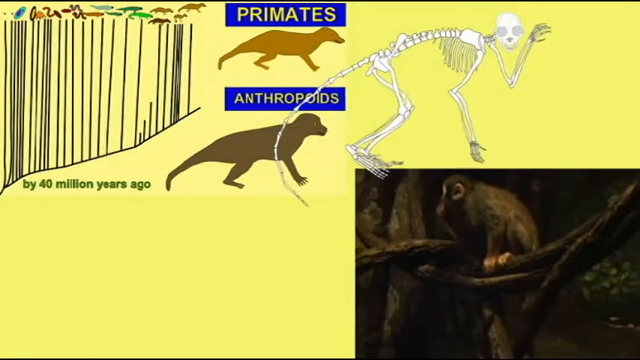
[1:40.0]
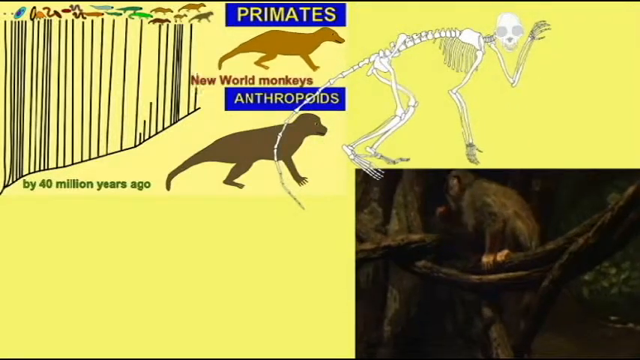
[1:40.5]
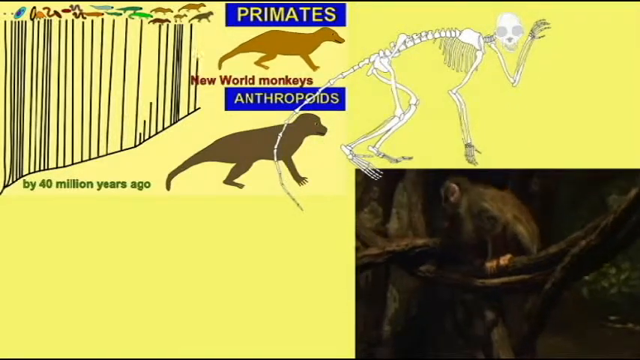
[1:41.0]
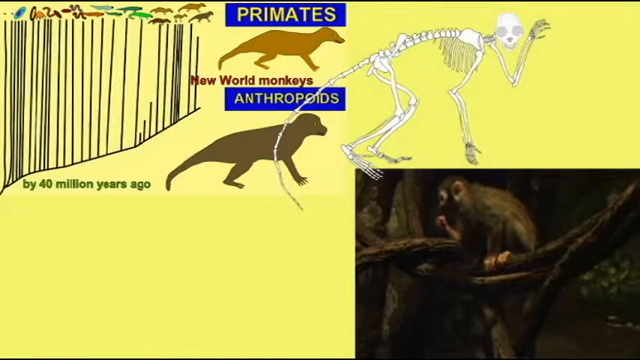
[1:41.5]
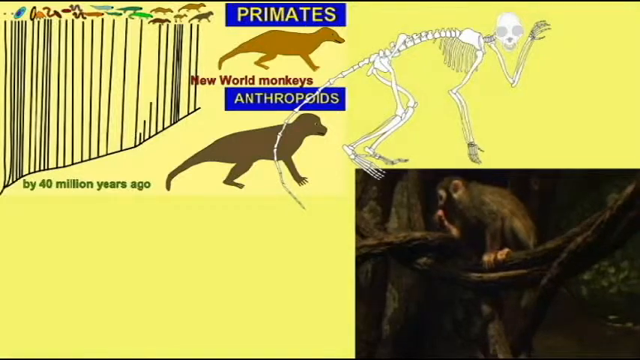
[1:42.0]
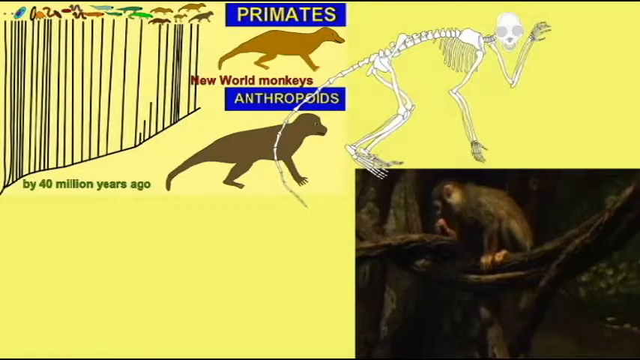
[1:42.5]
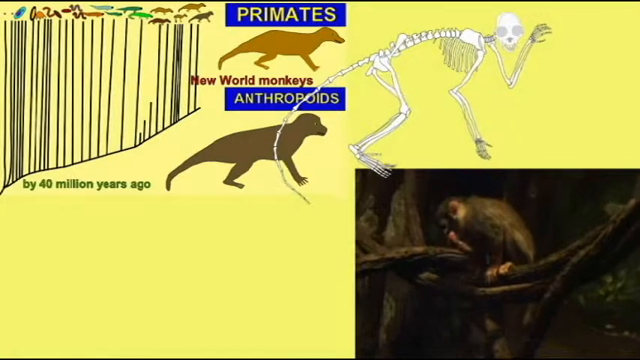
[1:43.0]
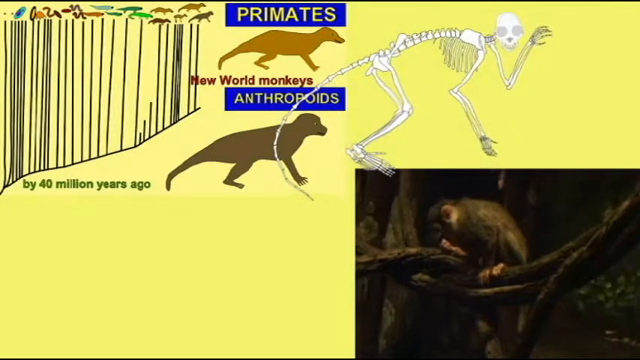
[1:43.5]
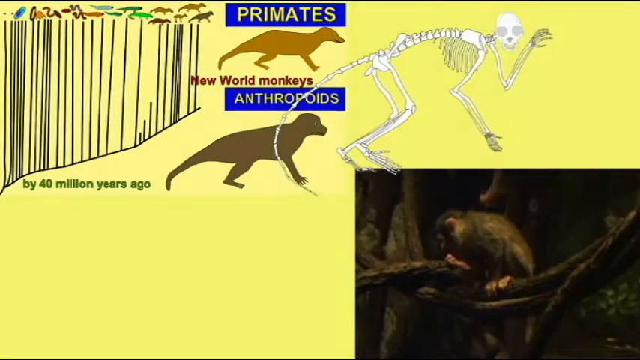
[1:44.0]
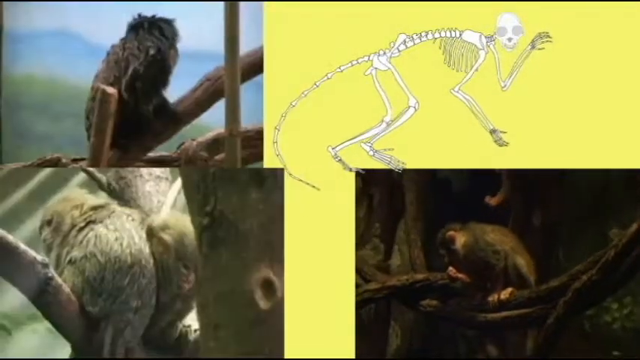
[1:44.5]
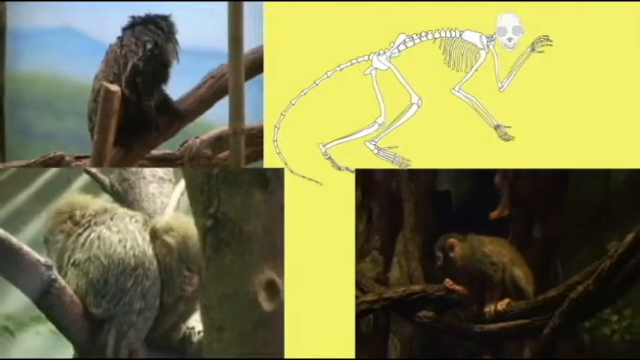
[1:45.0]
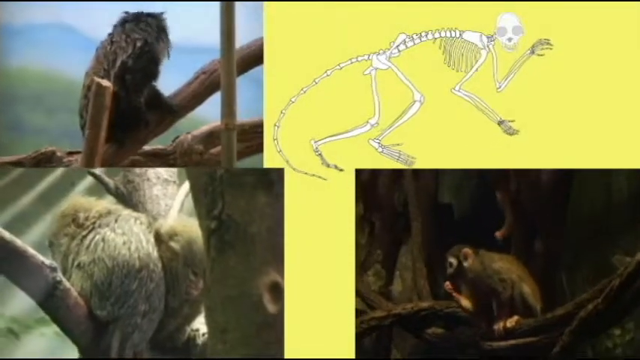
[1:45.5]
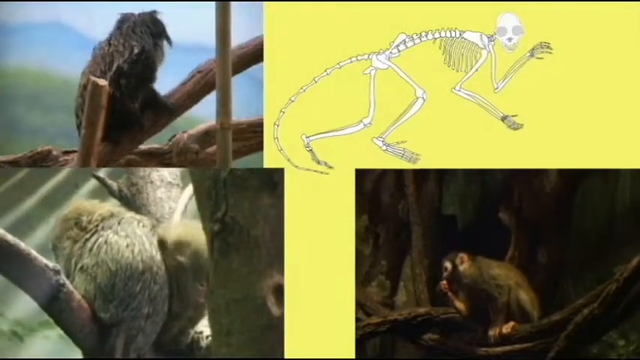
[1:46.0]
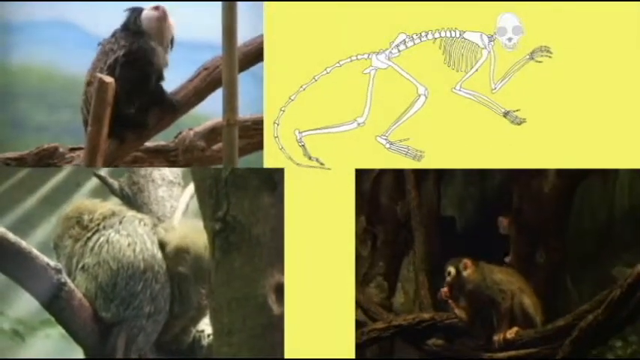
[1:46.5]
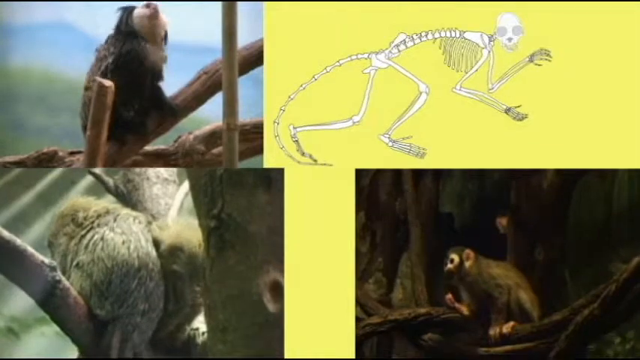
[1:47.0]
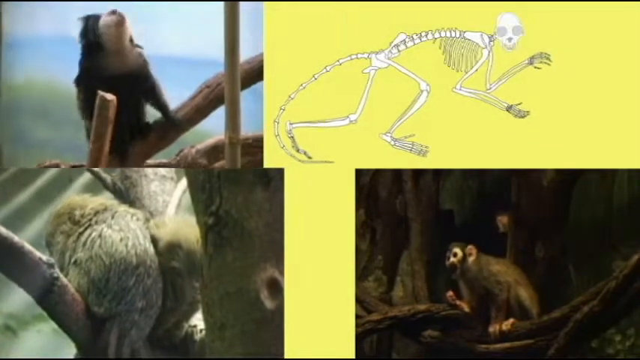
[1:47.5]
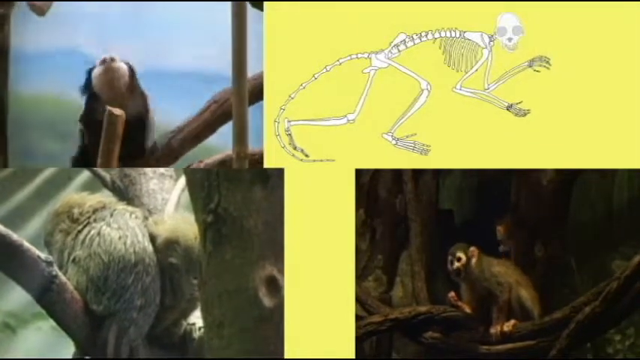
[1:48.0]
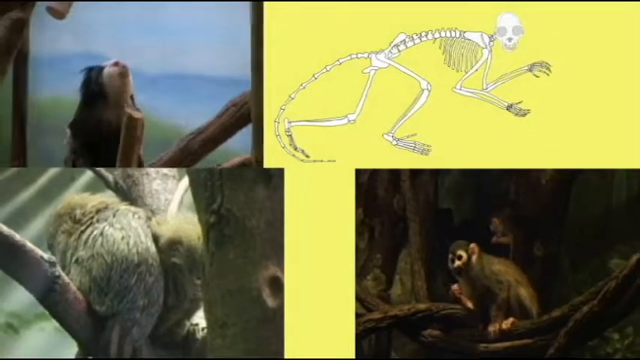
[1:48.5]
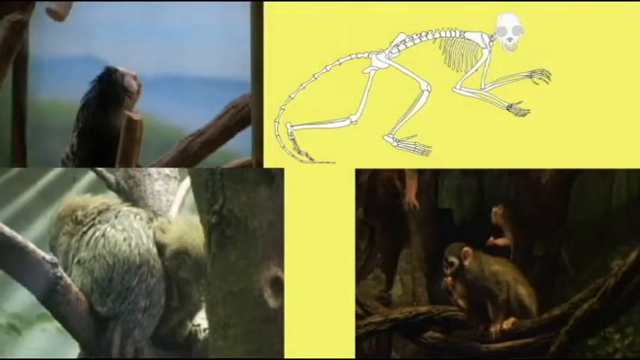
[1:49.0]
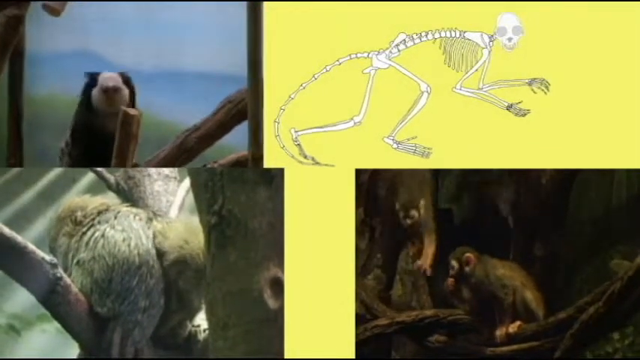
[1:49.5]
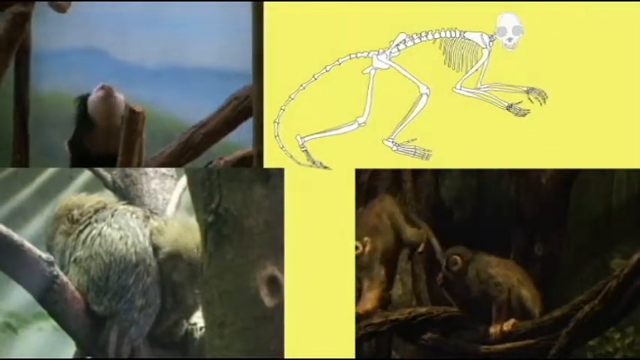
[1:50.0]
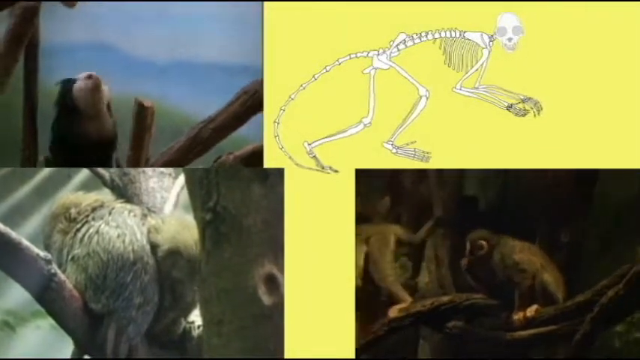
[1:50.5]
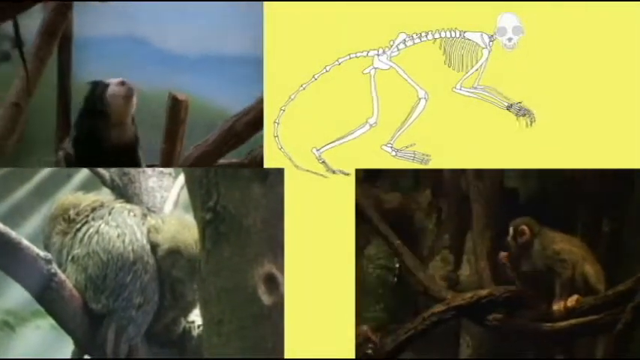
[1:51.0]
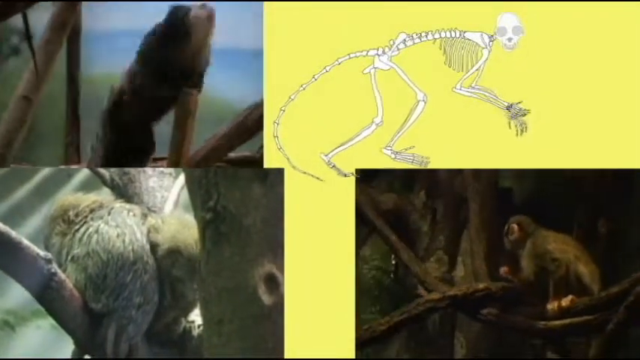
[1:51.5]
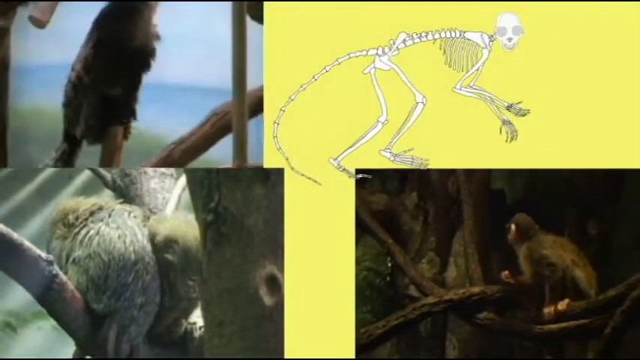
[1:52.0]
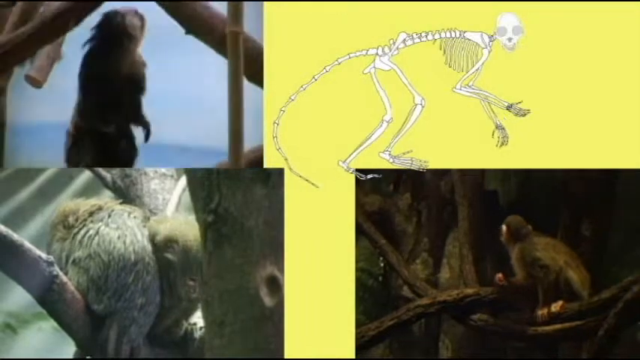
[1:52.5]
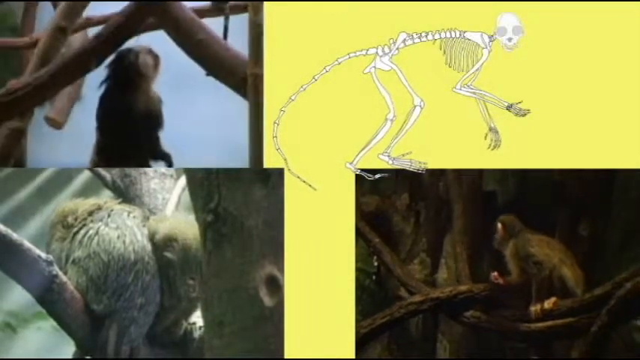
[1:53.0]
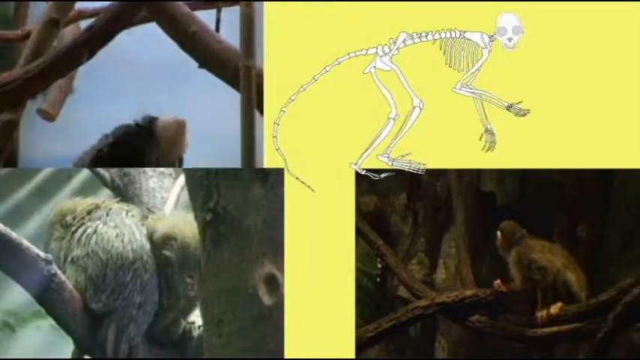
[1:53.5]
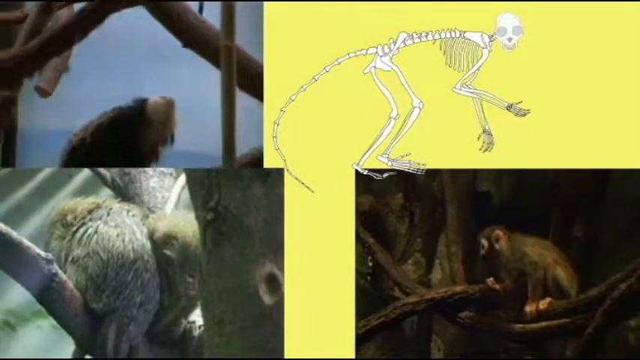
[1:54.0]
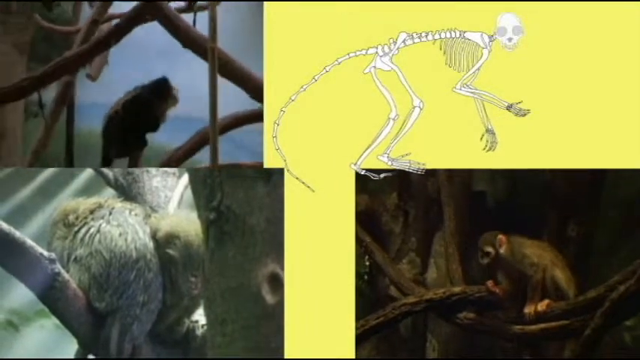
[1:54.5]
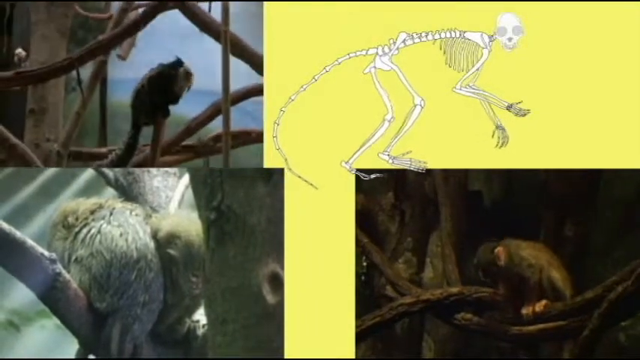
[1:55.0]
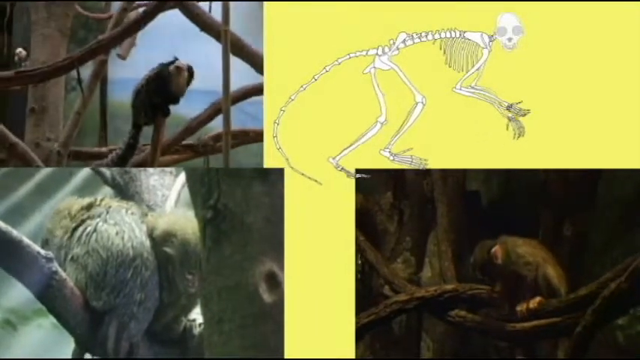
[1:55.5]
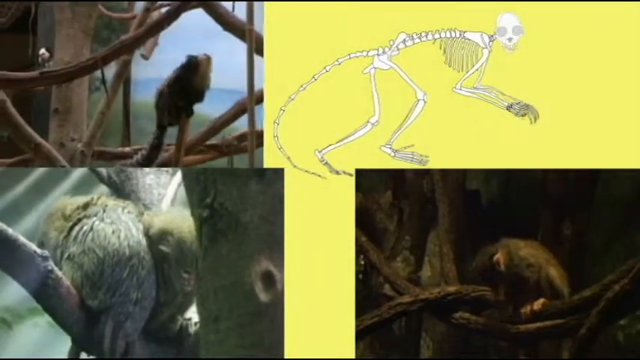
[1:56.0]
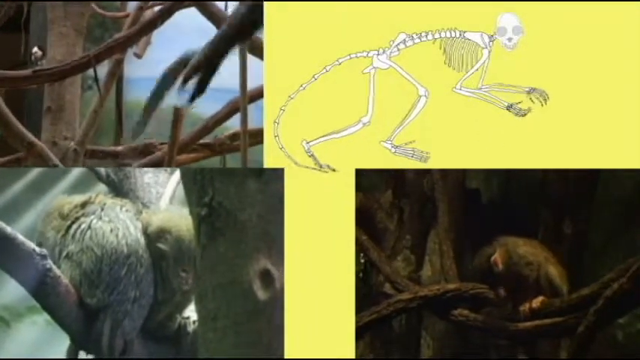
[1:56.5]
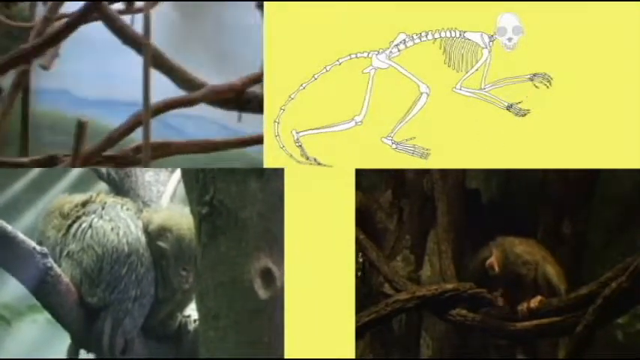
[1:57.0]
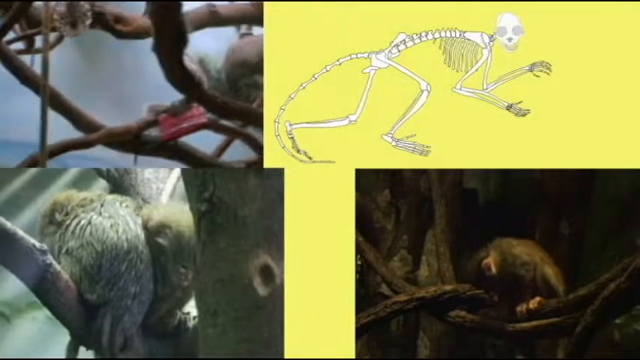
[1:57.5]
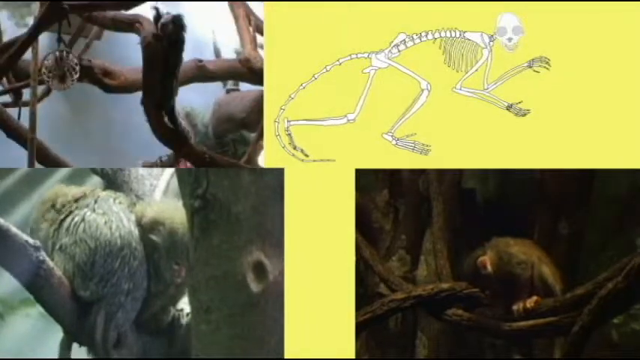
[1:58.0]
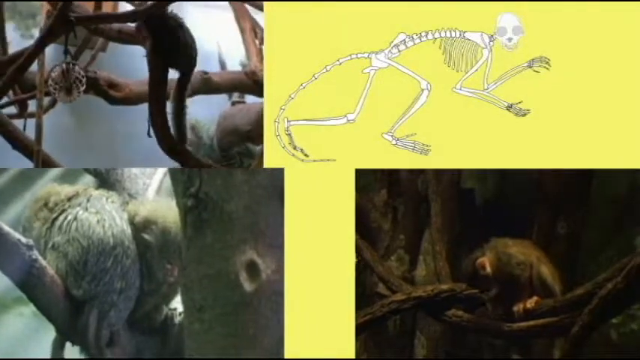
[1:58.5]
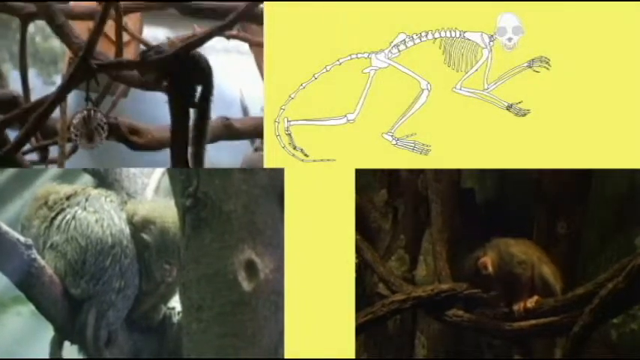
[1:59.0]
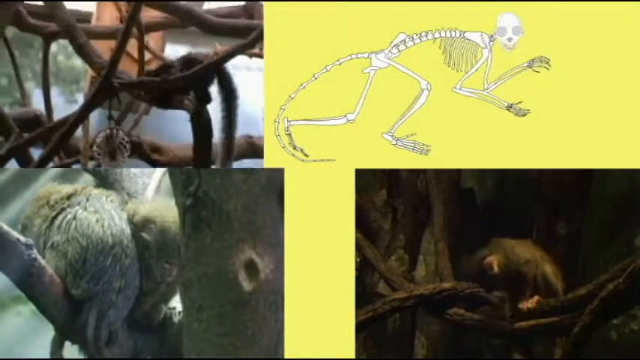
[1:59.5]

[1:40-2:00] Underneath the primates, blue text now shows "antropods" and "primates" separated, and between the two, new red text appears reading "new world monkeys." The monkey at the bottom right keeps moving around in the tree, and new clips appear on the left side of the screen showing other monkey-like figures and trees; the monkeys move, look around and stand on tree limbs. The skeletal figure in the middle continues to move its legs and arms. The monkey in the top left clip jumps from limb to limb, while the monkeys in the other two clips stay more in place.